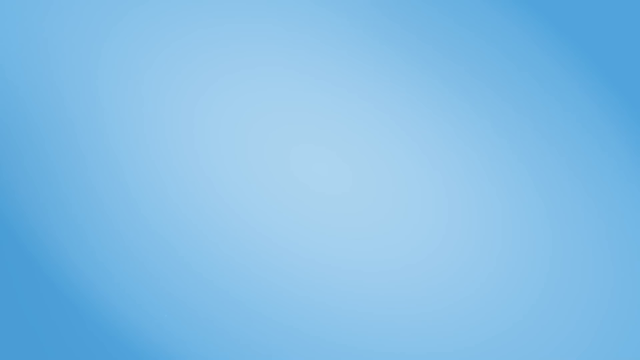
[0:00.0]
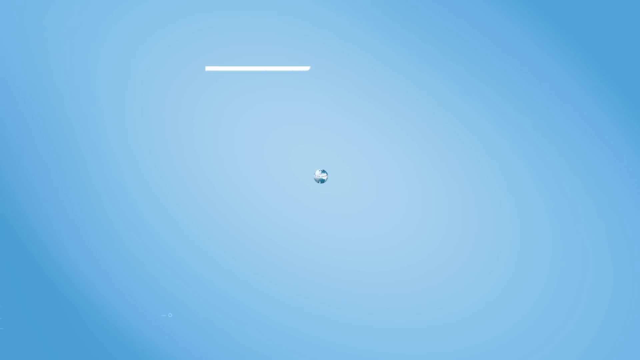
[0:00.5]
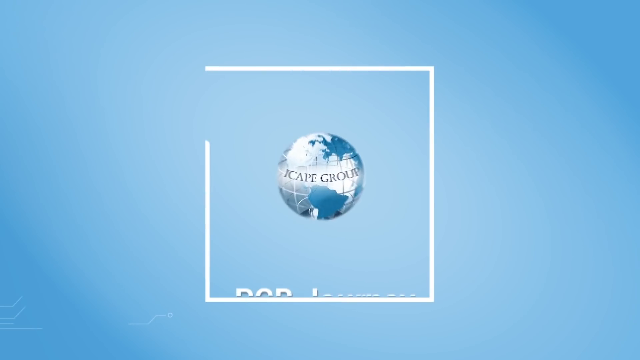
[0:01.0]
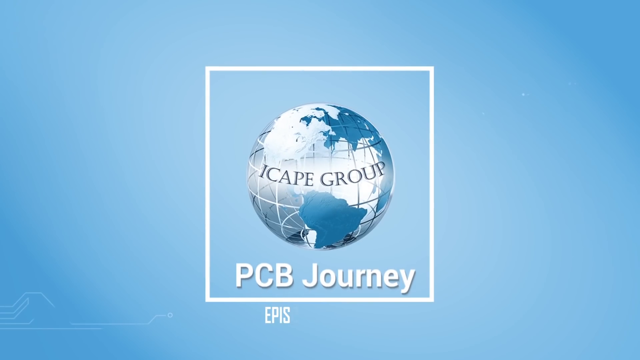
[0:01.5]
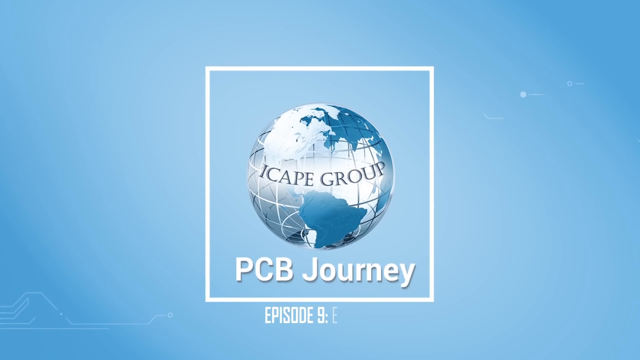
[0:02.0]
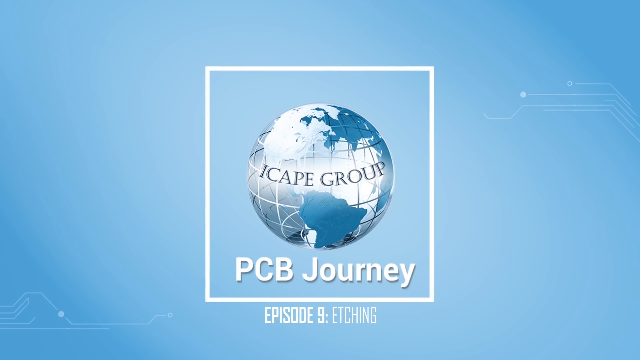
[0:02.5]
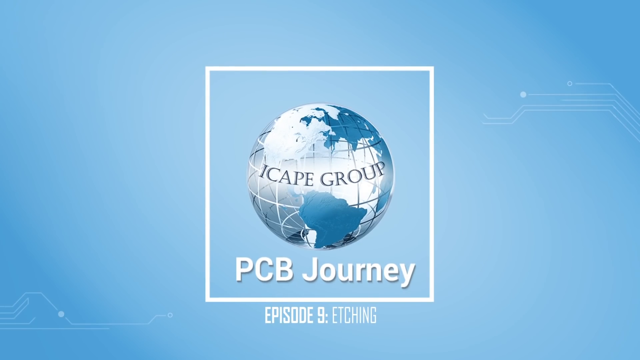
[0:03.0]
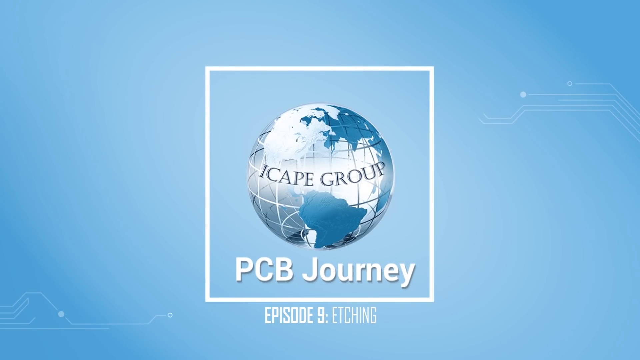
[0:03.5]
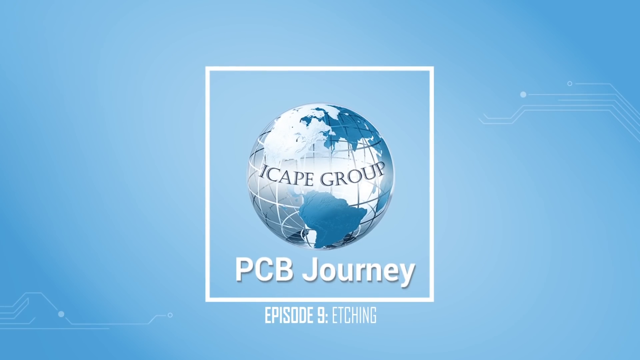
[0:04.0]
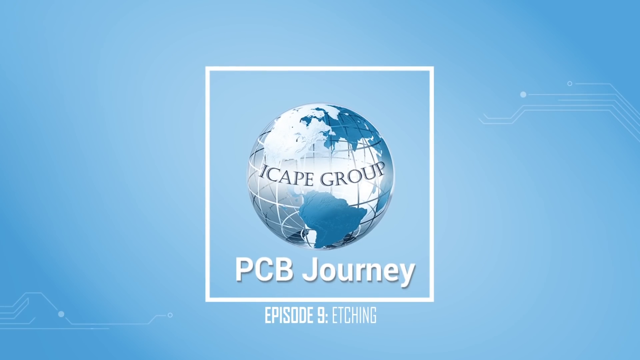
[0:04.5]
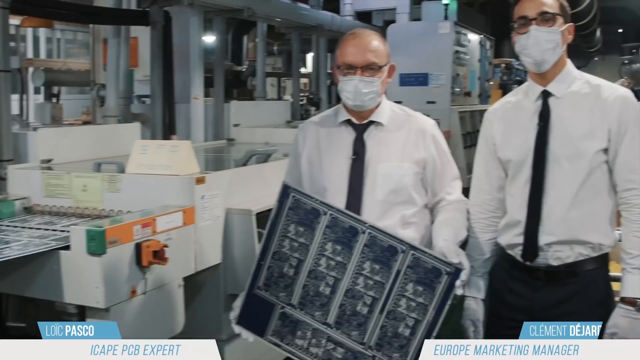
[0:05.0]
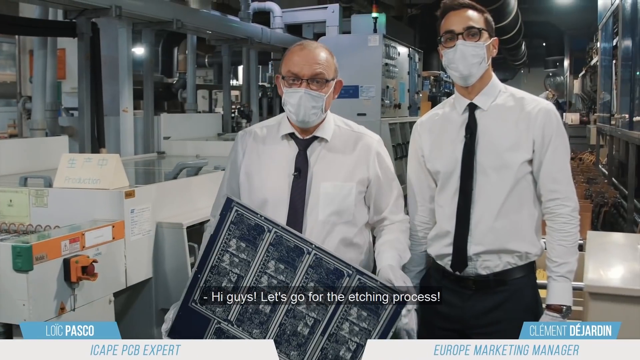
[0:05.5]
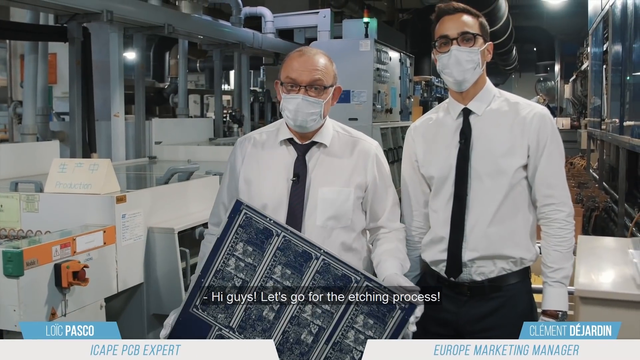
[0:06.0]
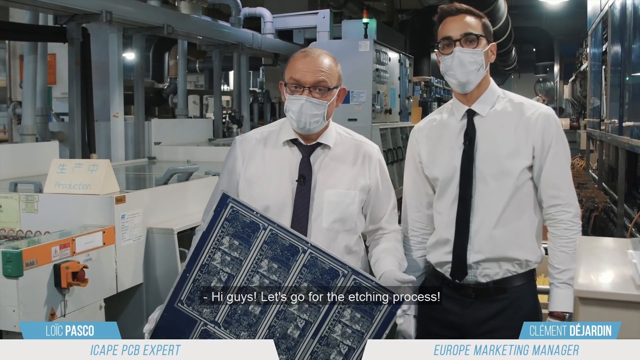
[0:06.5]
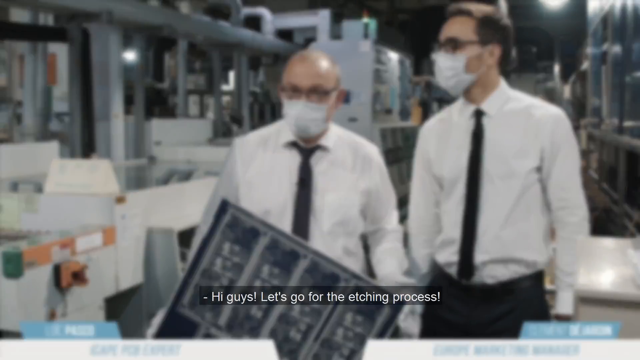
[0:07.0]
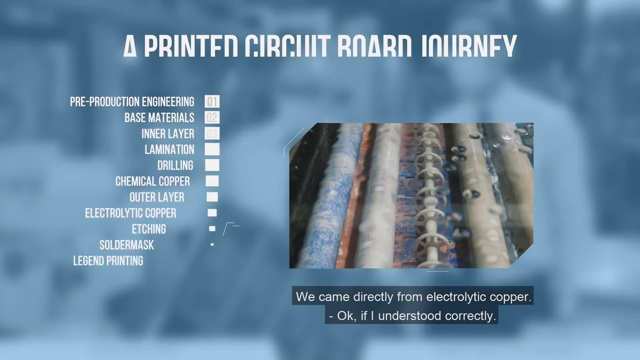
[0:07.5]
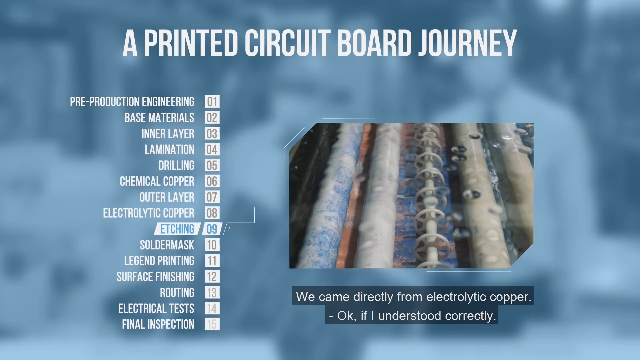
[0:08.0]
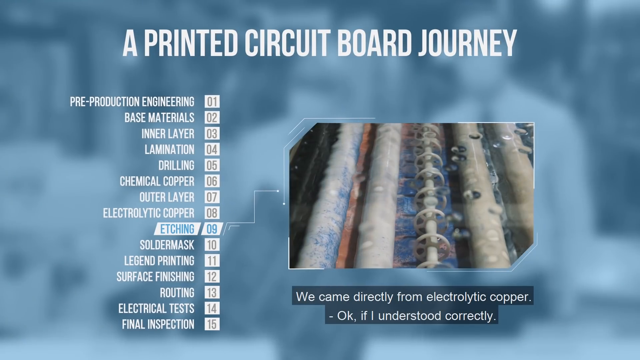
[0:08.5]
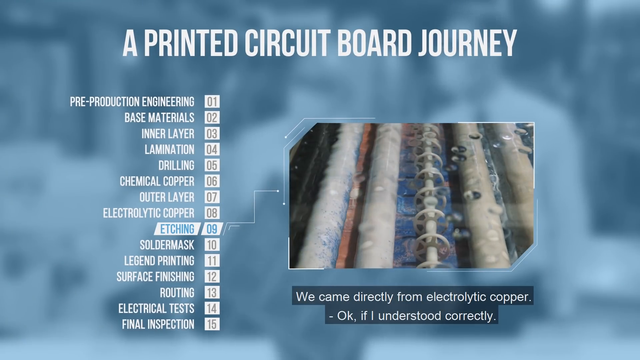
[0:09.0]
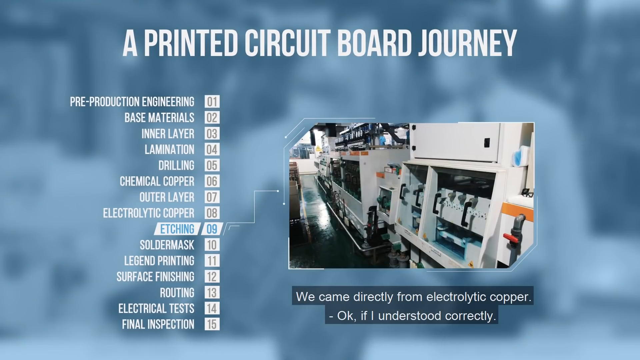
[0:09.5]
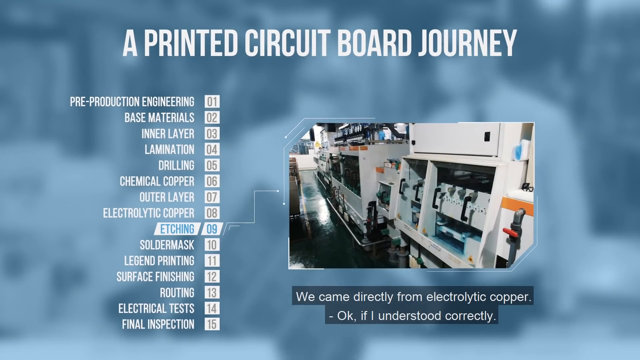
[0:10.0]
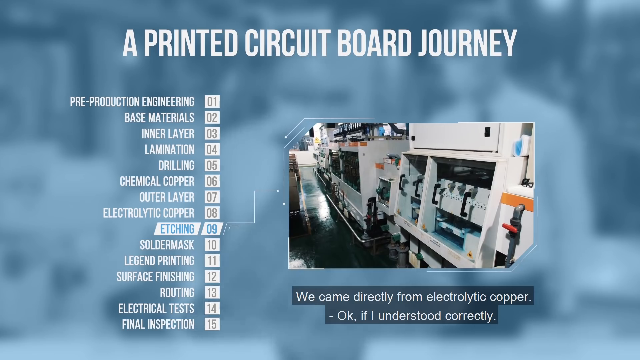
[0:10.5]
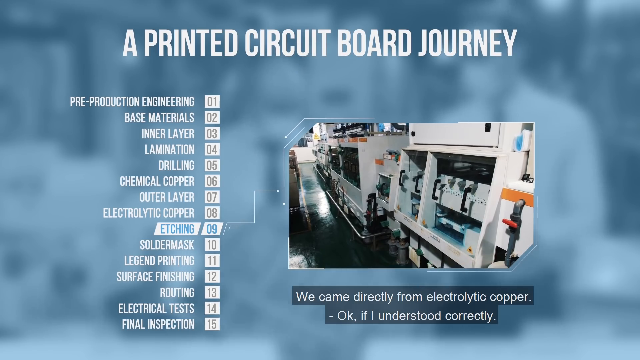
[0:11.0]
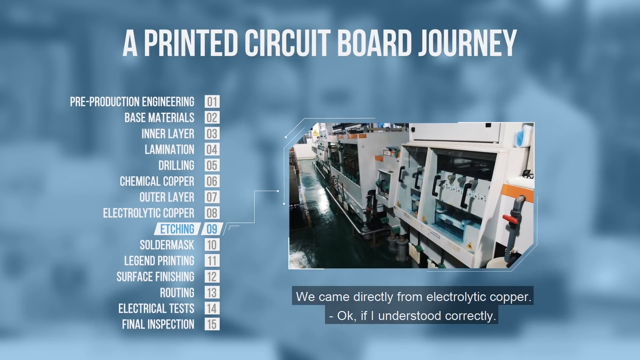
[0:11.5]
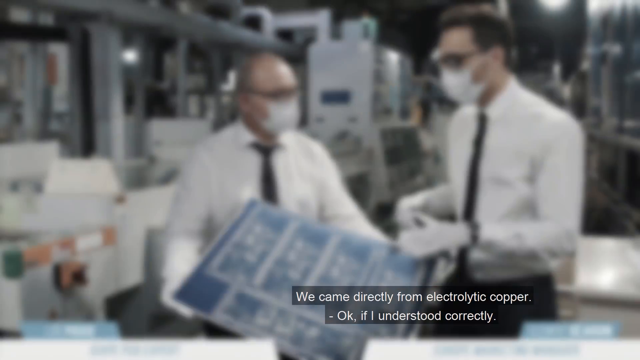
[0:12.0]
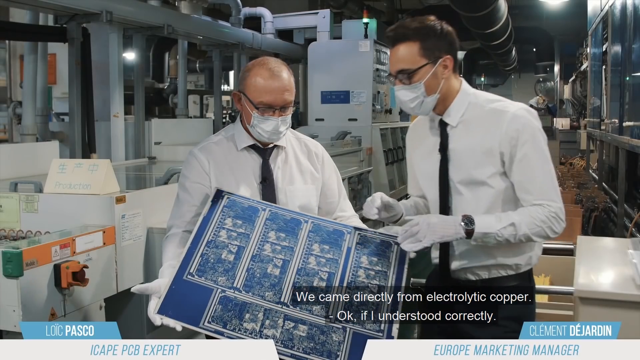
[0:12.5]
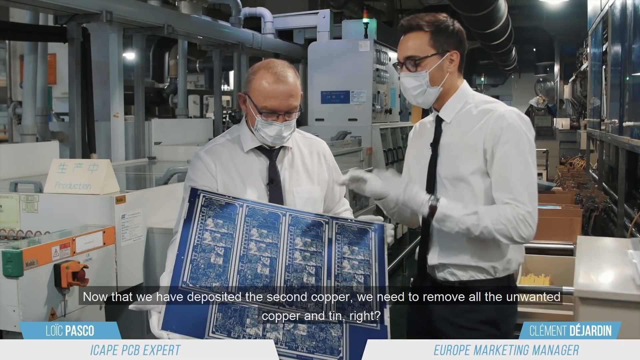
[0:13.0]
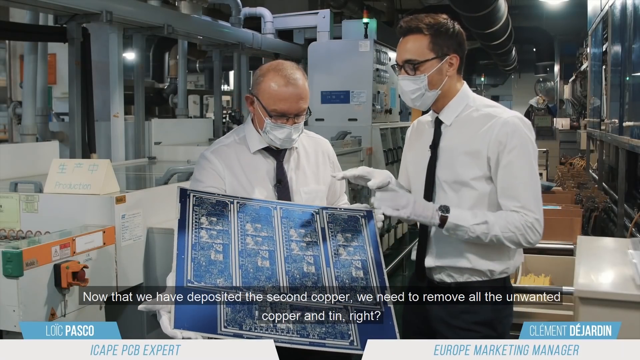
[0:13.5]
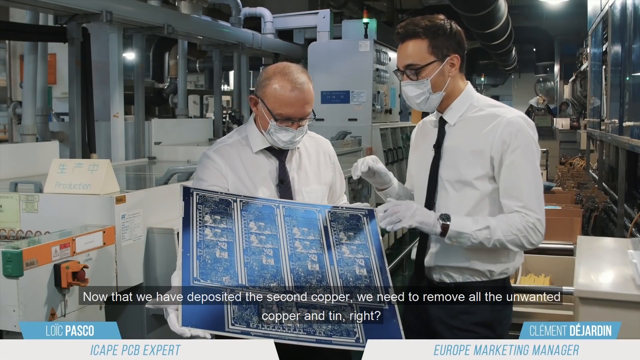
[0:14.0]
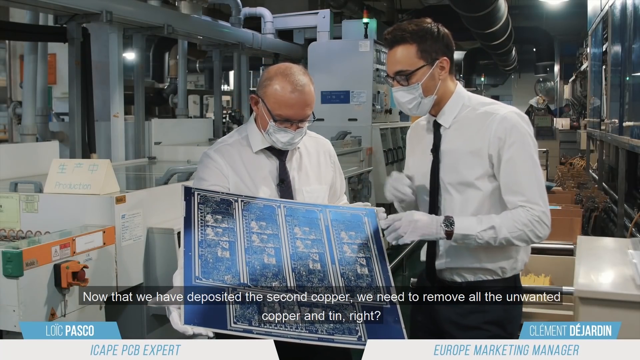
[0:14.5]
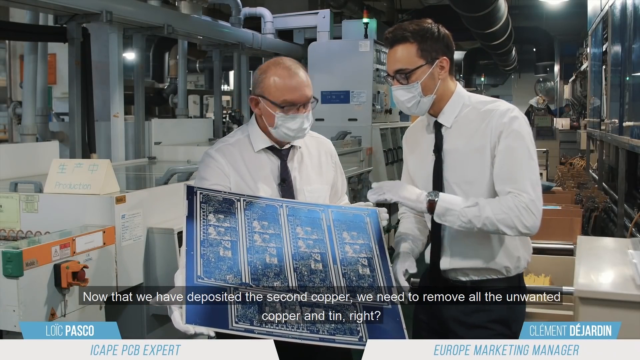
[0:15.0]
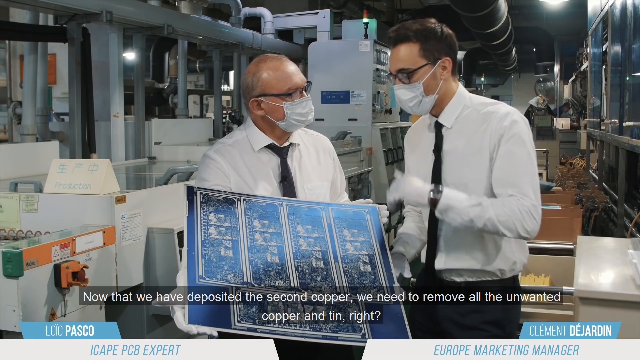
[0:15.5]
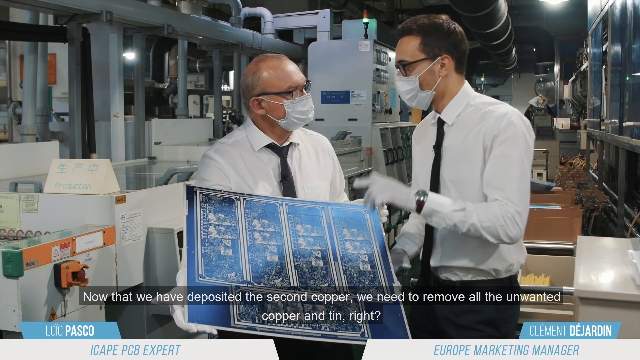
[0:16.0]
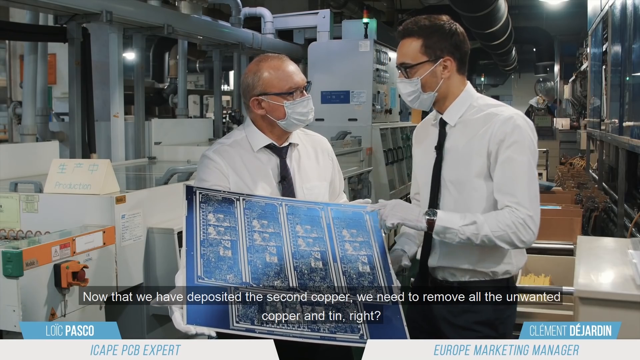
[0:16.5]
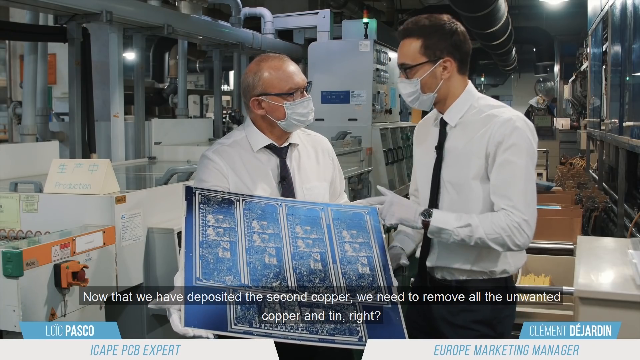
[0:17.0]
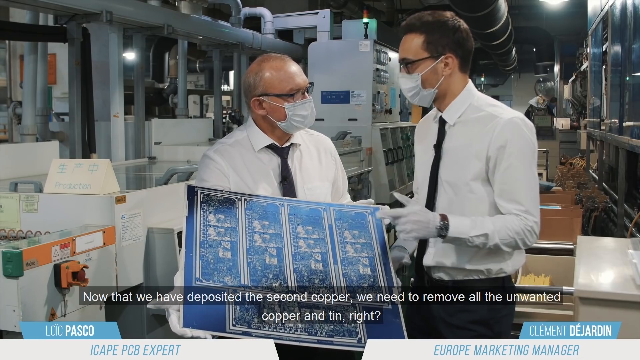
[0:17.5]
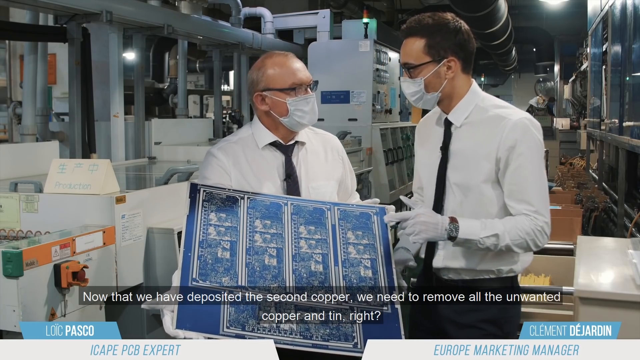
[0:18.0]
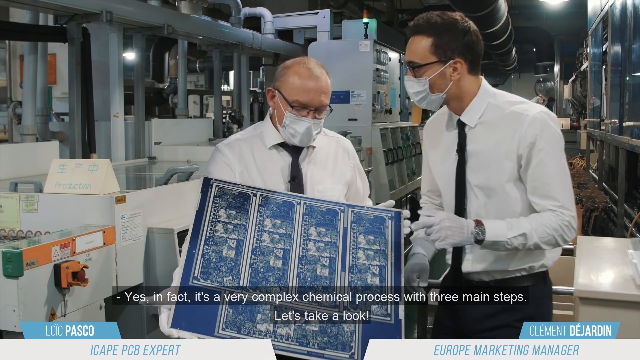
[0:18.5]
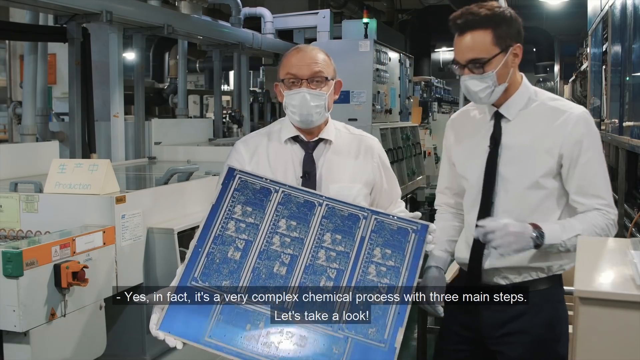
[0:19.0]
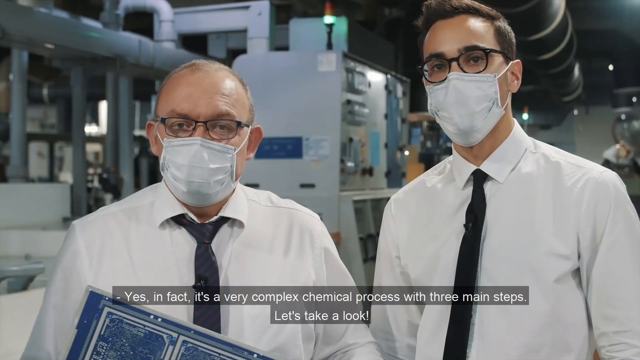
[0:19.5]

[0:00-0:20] A little map of the world is set against a blue background, with text mentioning "ICAPE group PCB journey" and "episode 9 etching". The video transitions to the inside of a factory, where a man wearing a blue shirt and a face mask looks at a large etched printed circuit board. It then transitions to two men in black ties, one of them holding the large etched printed circuit board; both wear face masks and glasses, and they look to be in an environment that produces these etched boards. Writing on the screen reads "hi guys let's go for the etching process" and details a printed circuit board journey and its various steps: there are 15 steps in the process, and this video focuses on step number nine, etching. The man interviewing the other asks whether, having come directly from electrolytic copper and deposited the second copper, they now need to remove all the unwanted copper and tin, and the man holding the board says yes, in fact it's a very complex chemical process with three main steps.